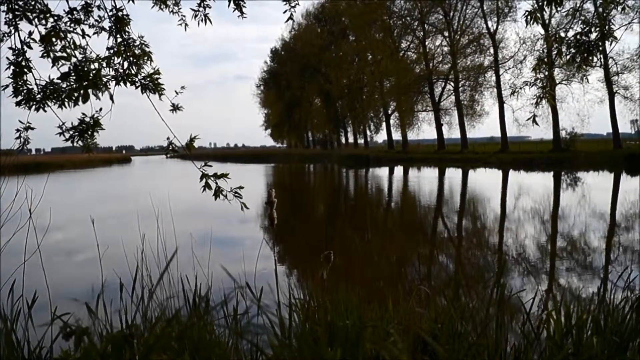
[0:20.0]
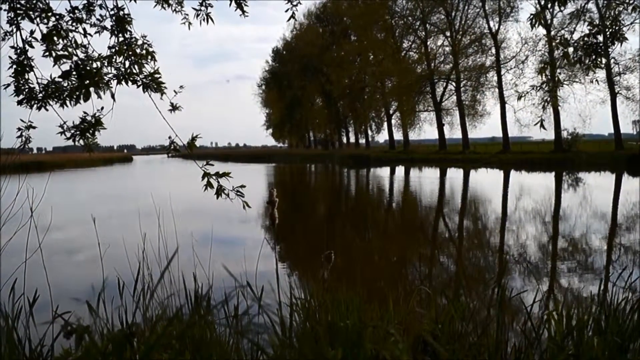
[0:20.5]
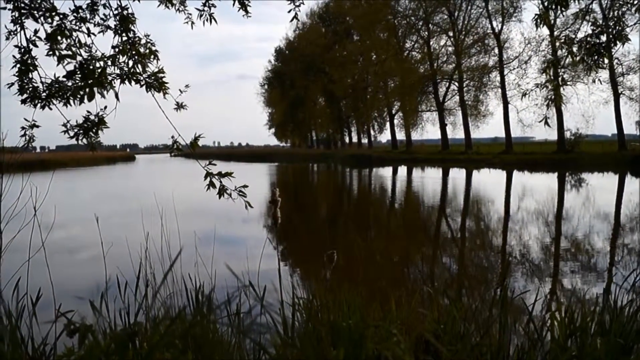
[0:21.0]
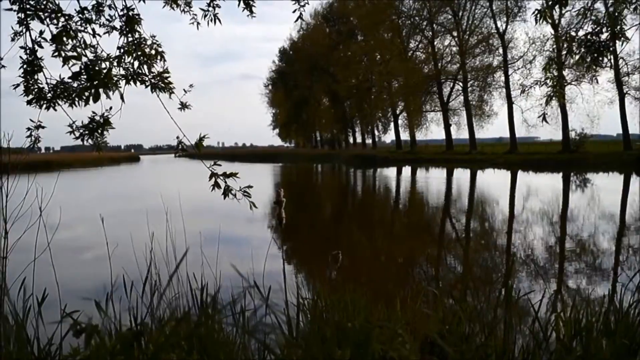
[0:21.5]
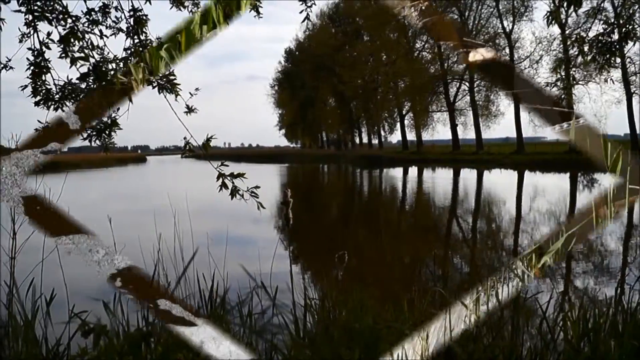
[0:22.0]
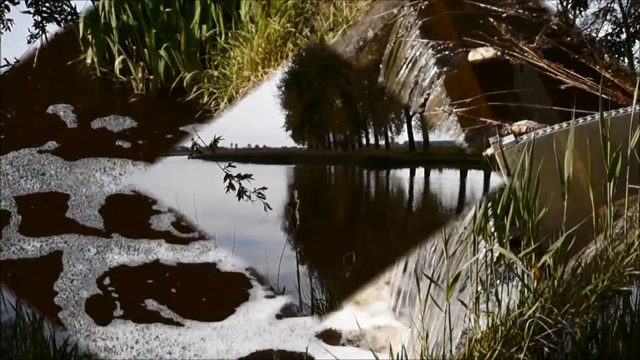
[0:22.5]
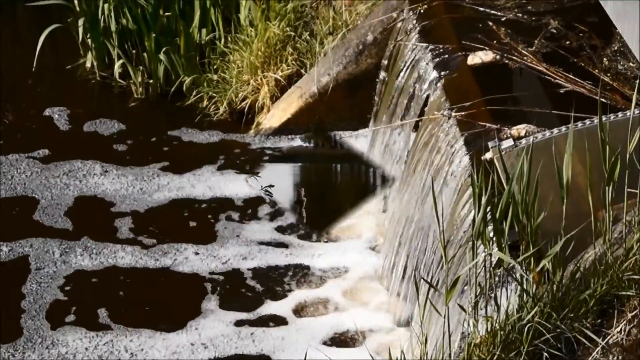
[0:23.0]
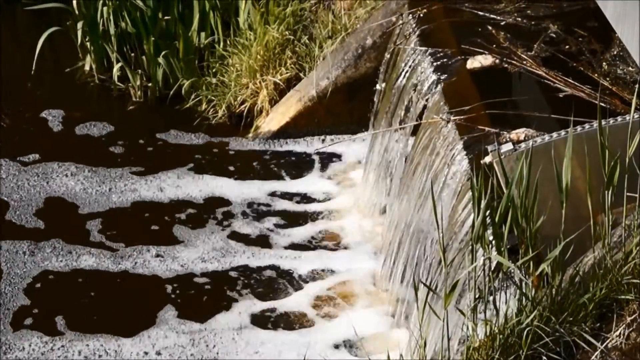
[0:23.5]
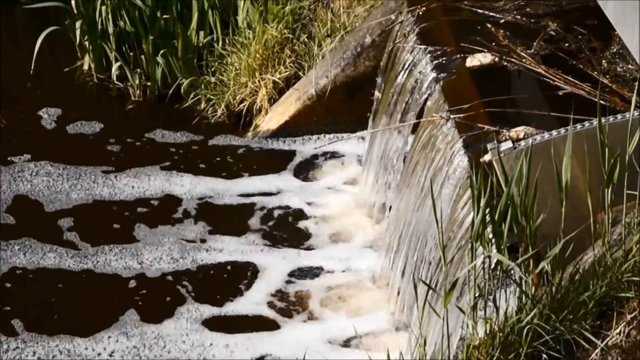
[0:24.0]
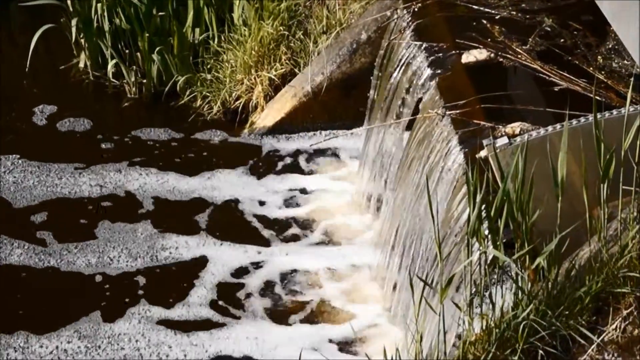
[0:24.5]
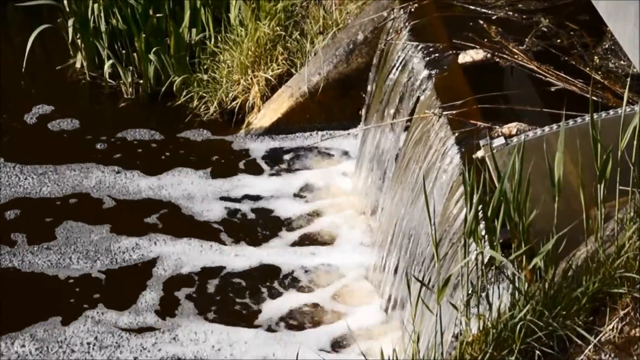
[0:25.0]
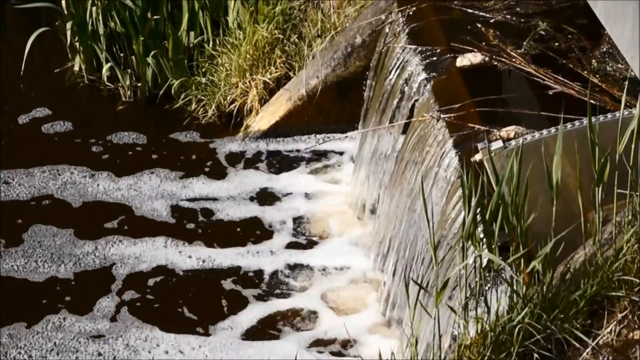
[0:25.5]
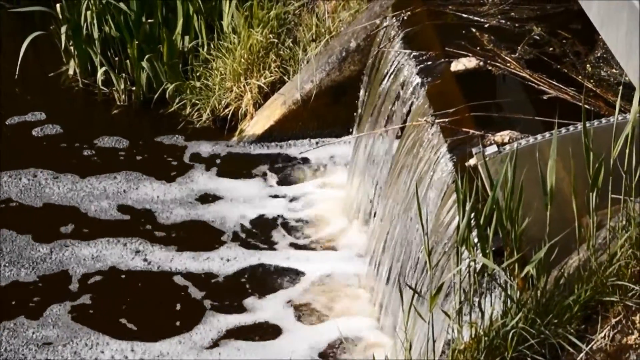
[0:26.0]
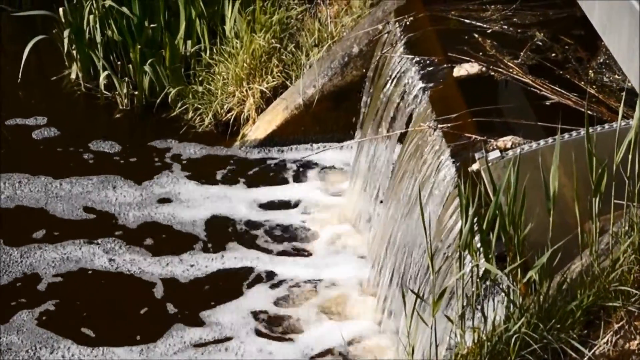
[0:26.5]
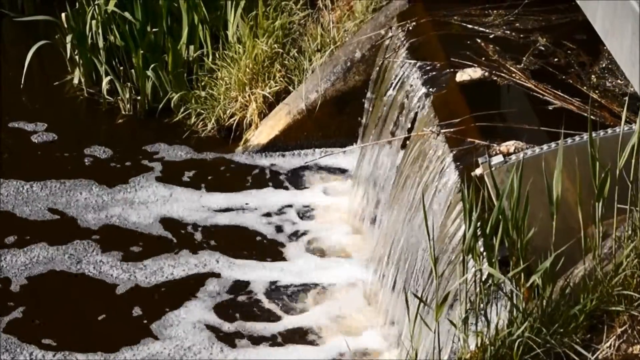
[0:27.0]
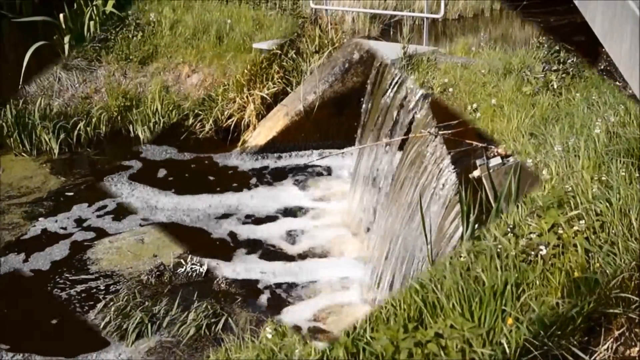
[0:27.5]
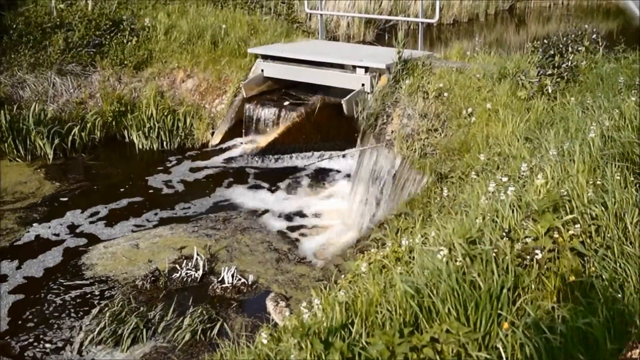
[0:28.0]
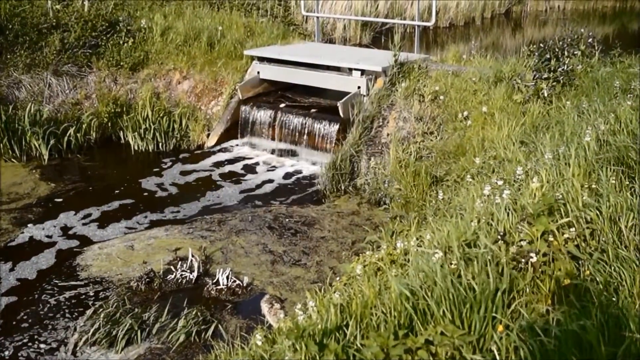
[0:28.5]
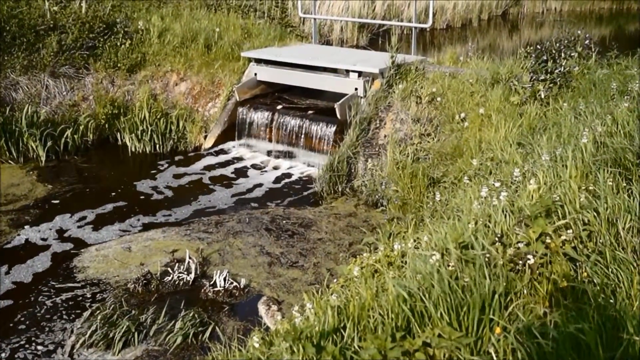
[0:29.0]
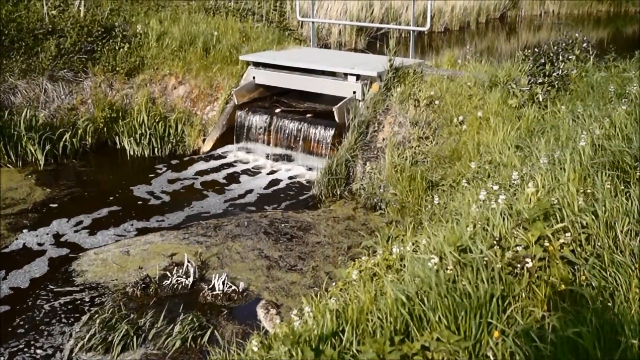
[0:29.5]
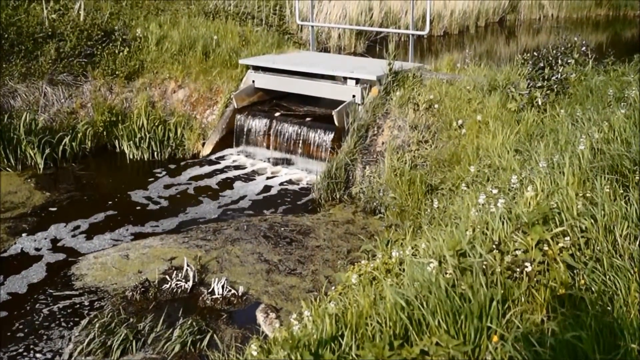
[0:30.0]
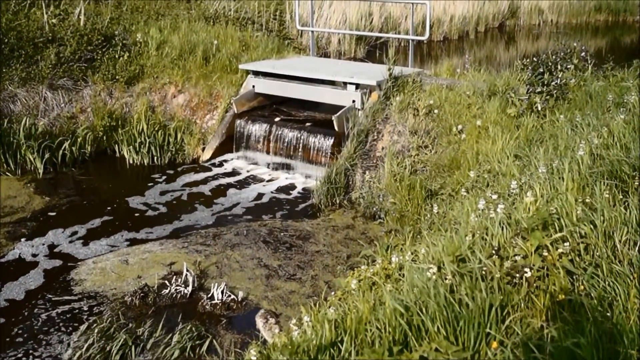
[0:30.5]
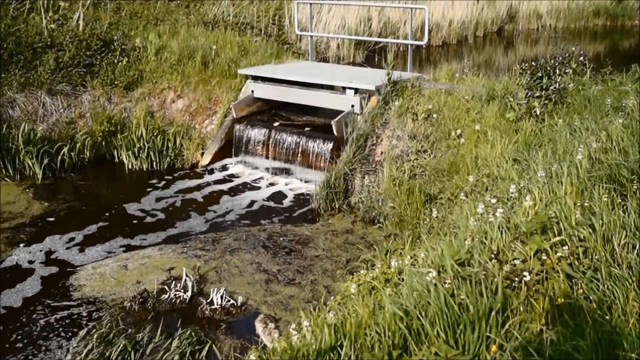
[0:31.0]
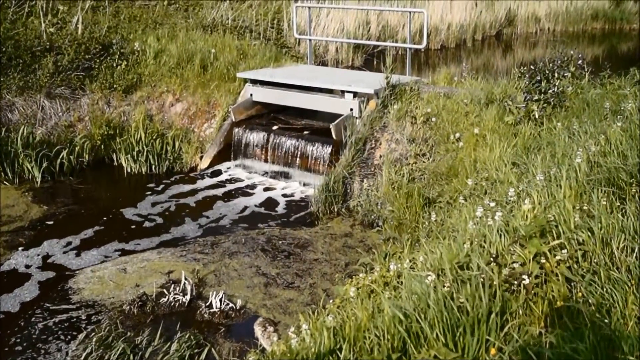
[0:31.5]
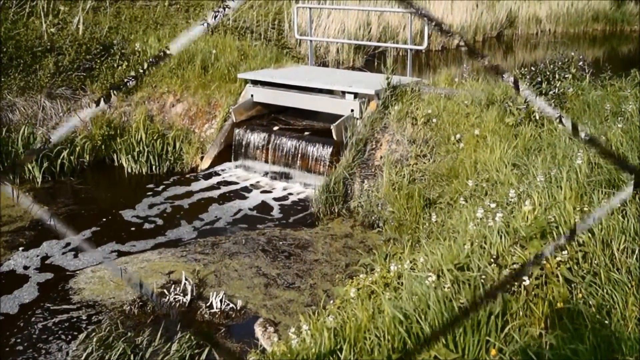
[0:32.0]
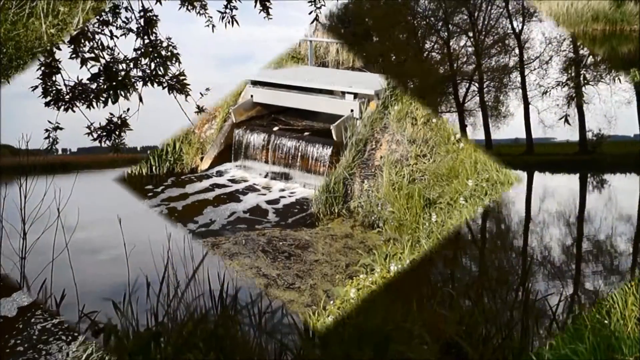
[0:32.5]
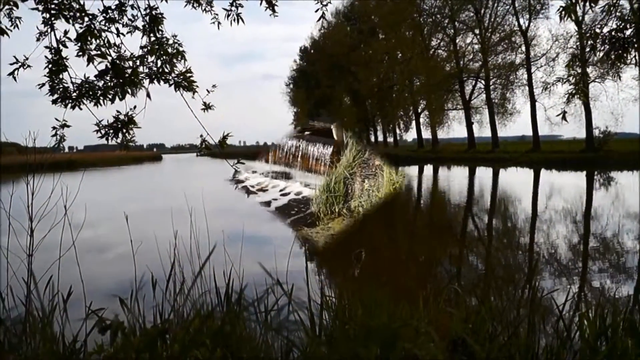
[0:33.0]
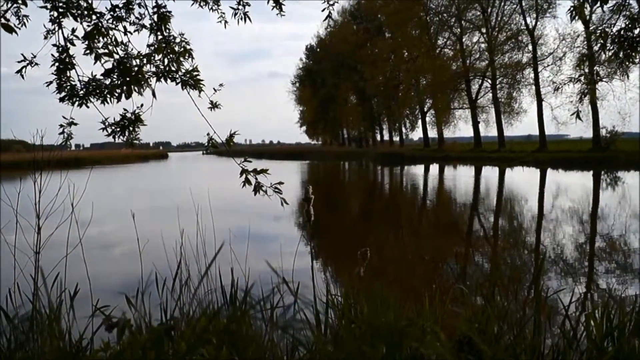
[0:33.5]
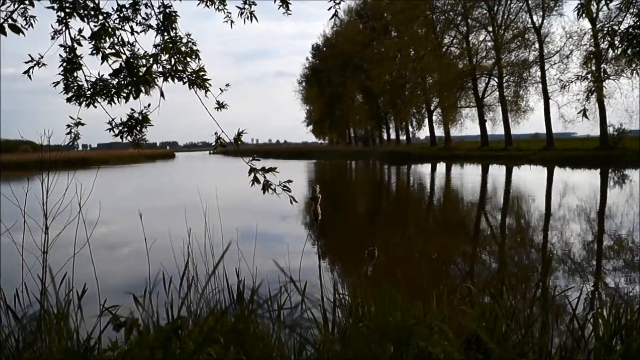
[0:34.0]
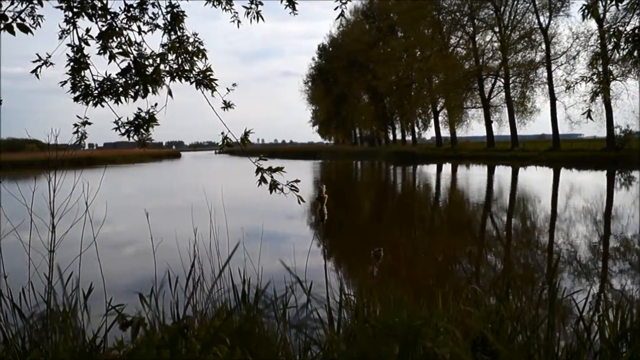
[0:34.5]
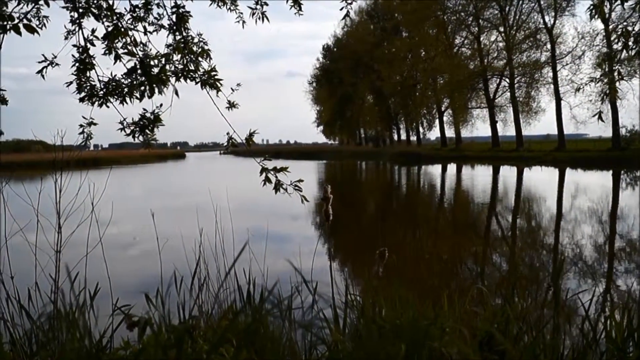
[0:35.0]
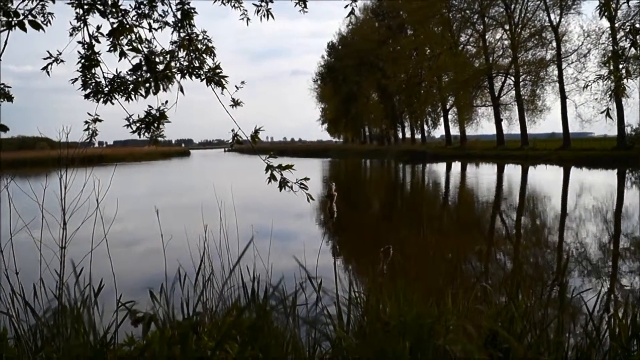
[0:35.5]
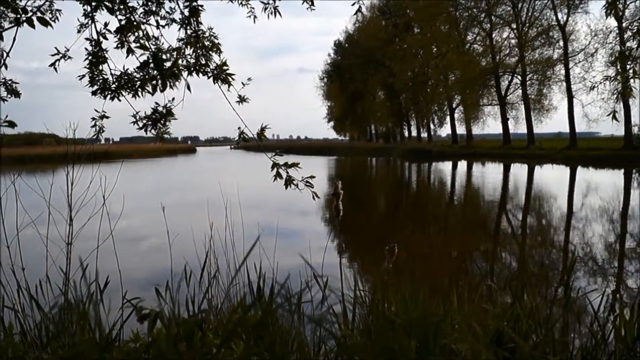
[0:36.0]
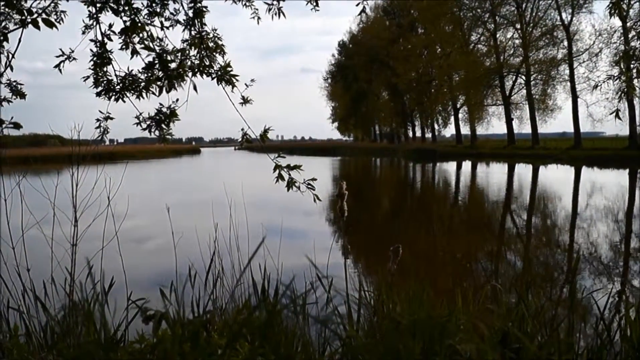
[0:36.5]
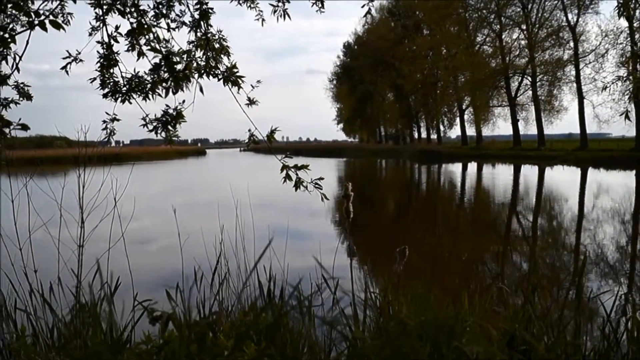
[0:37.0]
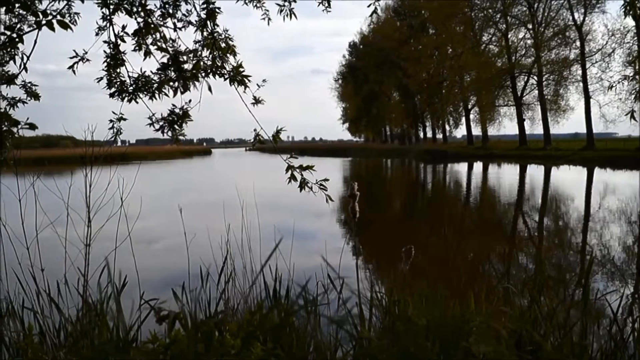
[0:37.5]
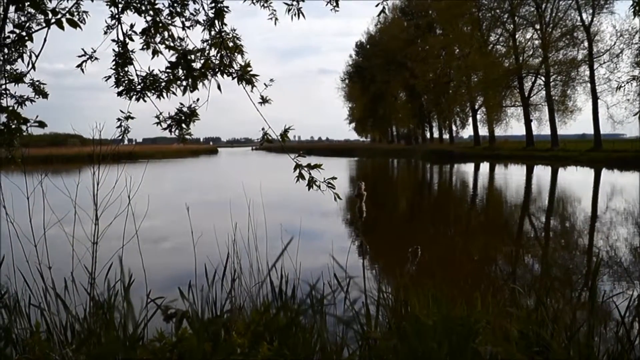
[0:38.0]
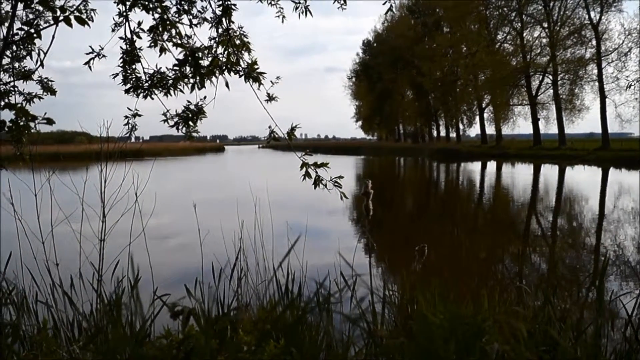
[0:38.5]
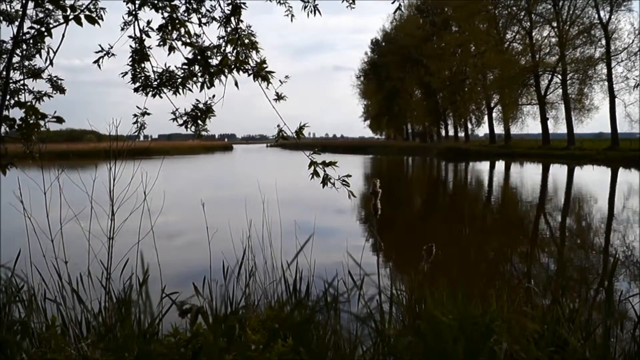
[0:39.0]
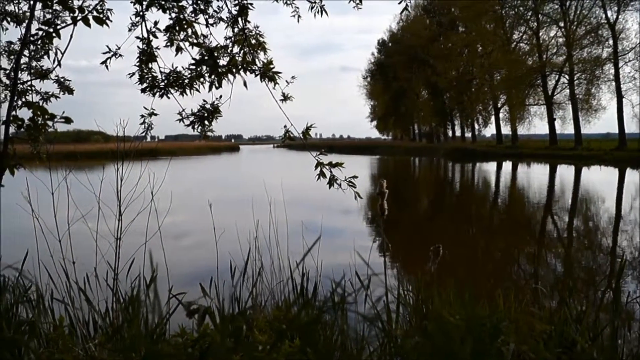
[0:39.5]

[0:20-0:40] What looks like a little river area appears, viewed across the water toward the other embankment, with leaves and branches overhead so that the viewpoint seems to be under a tree. On the opposite embankment are around ten trees standing tall with a lot of leaves, the sky is light blue and cloudy, and the river reflects the trees. A diamond transition leads to a little stream with a small waterfall on the right, around one meter high, that looks like a man-made dam or waterfall pouring water into the stream. The stream flows from right to left, and there is concrete at the side of the waterfall, so it is definitely man-made. Grass is at the top middle and bottom right of the frame, bordering the waterfall on the left and right. After another diamond transition the view zooms out to the small man-made dam/waterfall: at the top right a body of water streams into the dam, which pours it down into the stream. The dam looks white, very small and man-made, only about one meter high, with grass around it, and the stream runs from the top right down to the bottom left. A diamond transition returns to the river scene with the trees on the other embankment reflected in the river, the sky, and the land around the middle of the frame, and the camera begins panning a little to the left, showing more of the river.